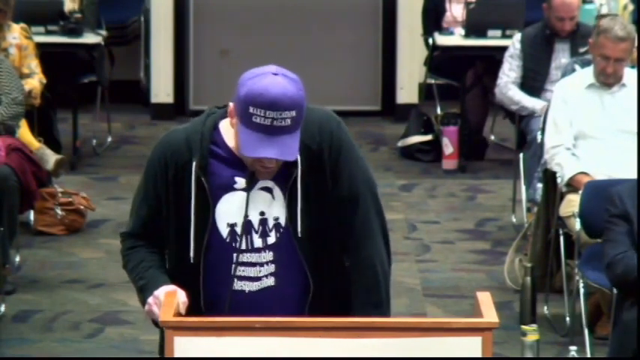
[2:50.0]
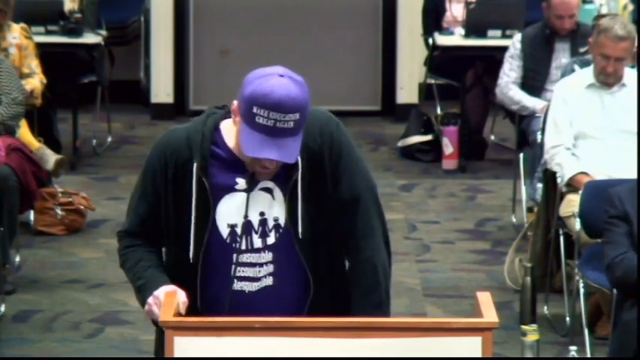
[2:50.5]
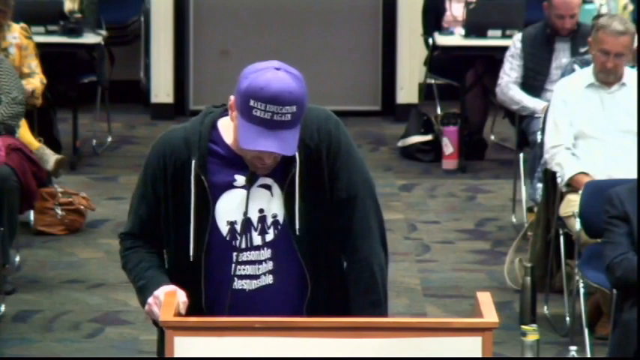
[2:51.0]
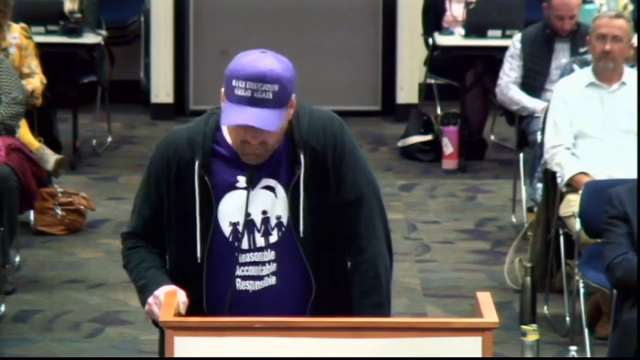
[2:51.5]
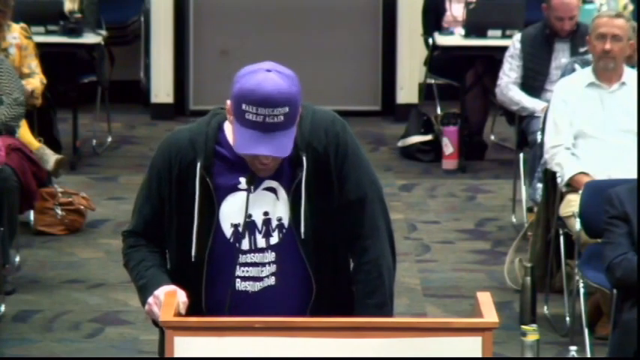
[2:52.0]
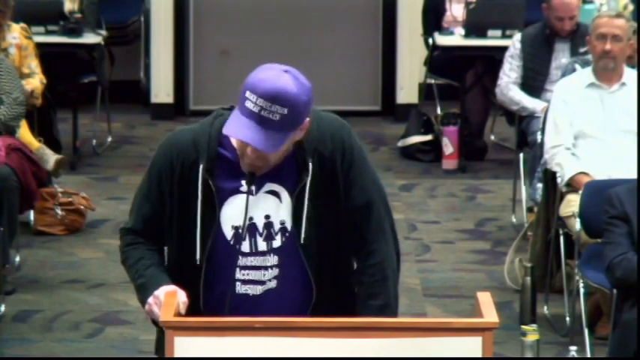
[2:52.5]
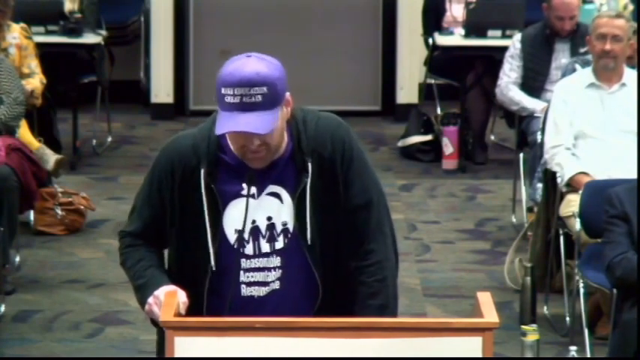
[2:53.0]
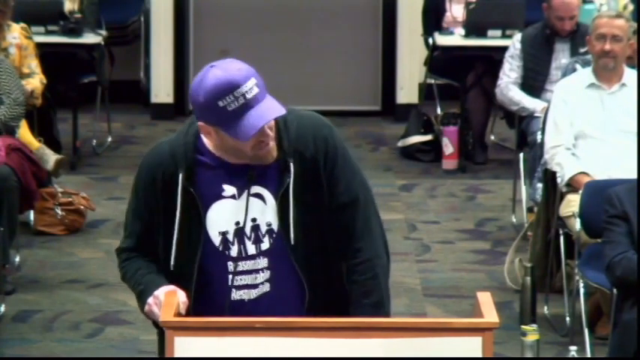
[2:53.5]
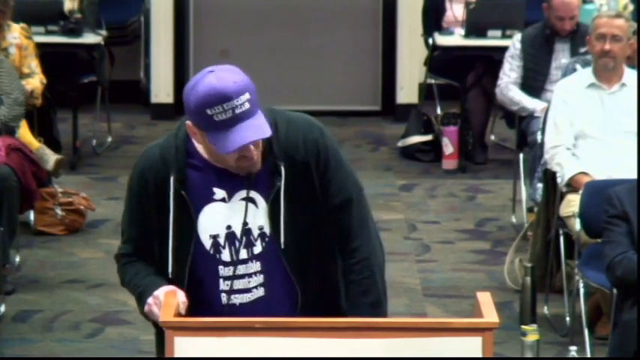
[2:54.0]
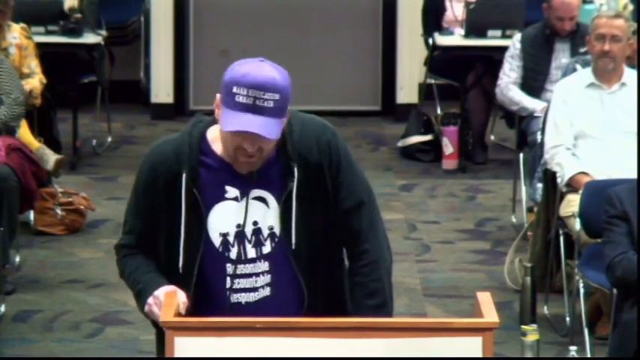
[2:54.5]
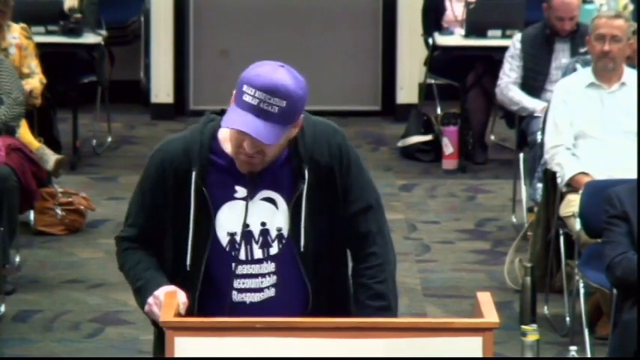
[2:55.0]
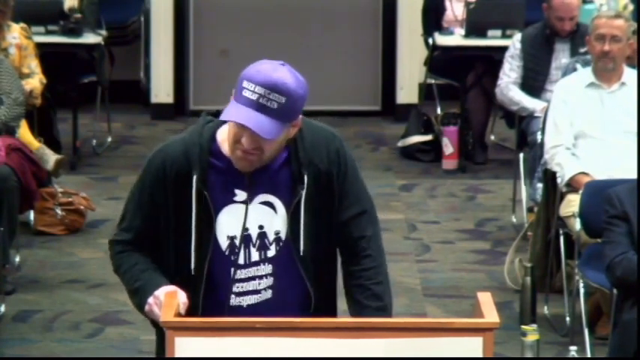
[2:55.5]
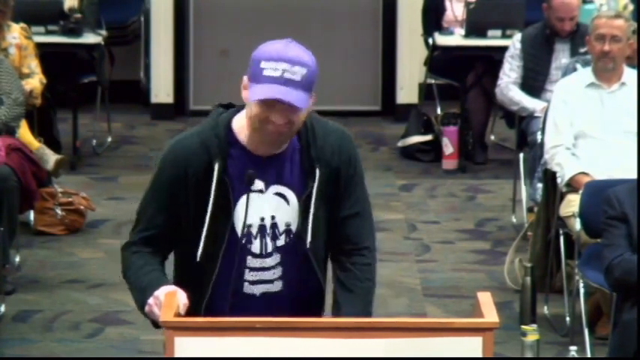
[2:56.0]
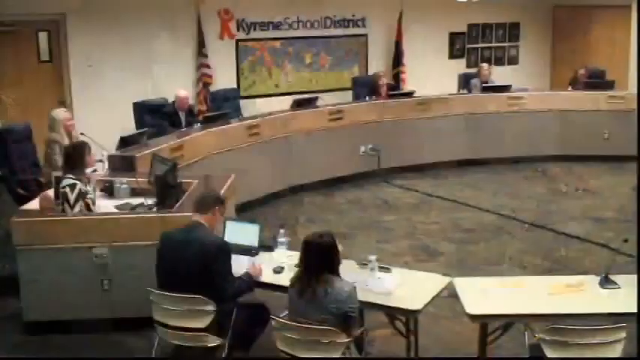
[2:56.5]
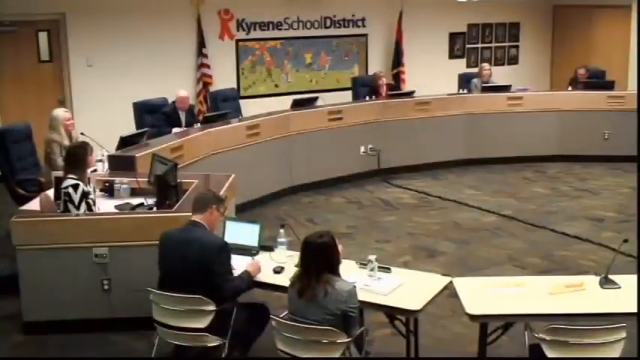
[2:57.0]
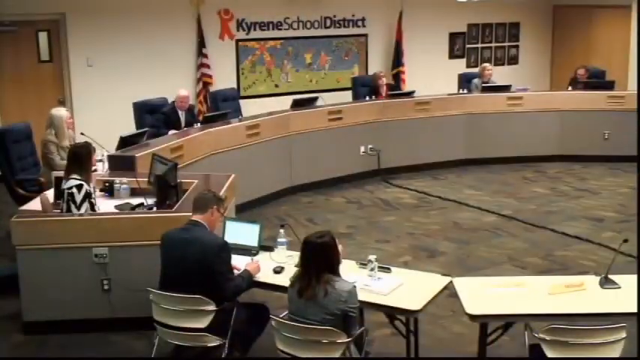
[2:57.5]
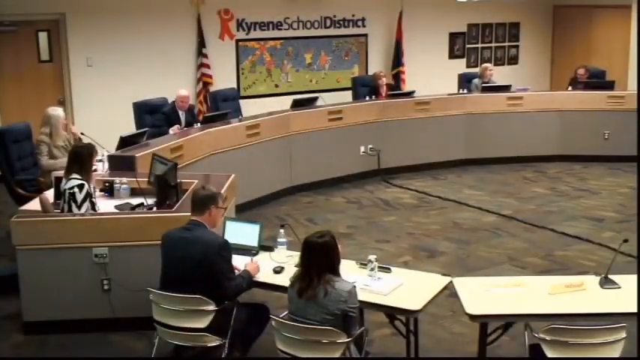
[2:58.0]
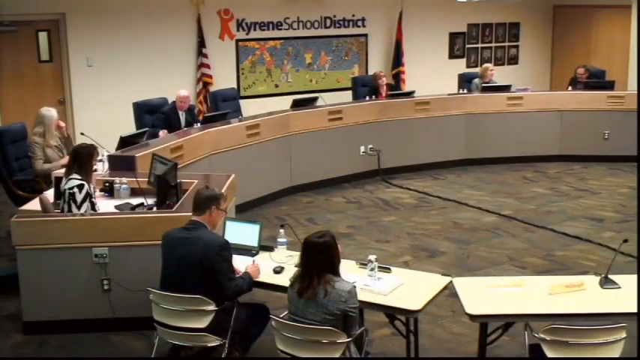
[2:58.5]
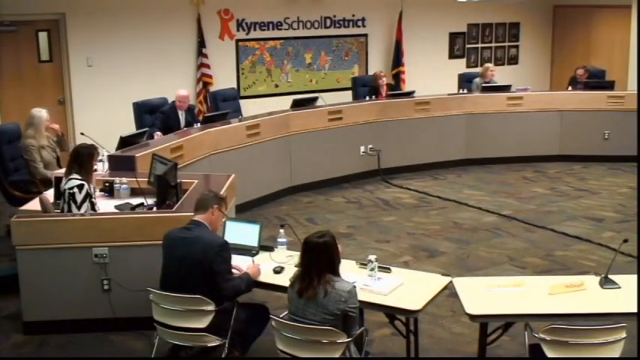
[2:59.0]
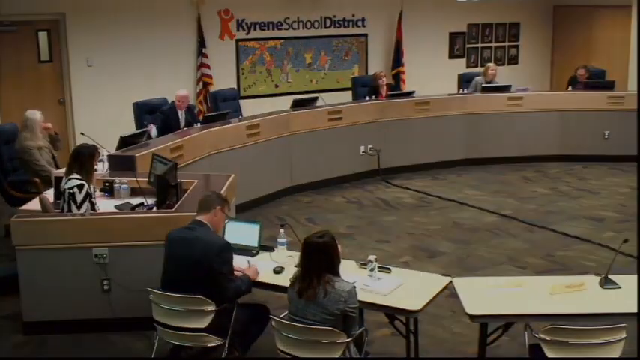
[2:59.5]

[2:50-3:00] A white man is talking by a podium; he seems very animated and does not seem very happy about what is taking place. He wears a purple cap, a purple shirt and a black hoodie. After he leaves the podium, people are shown sitting by a circular table: six people, men and women. On the wall behind the table are the words "Kyrene School District," along with a picture and the American flag.